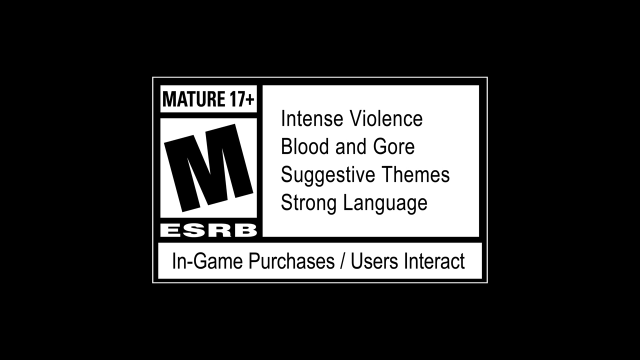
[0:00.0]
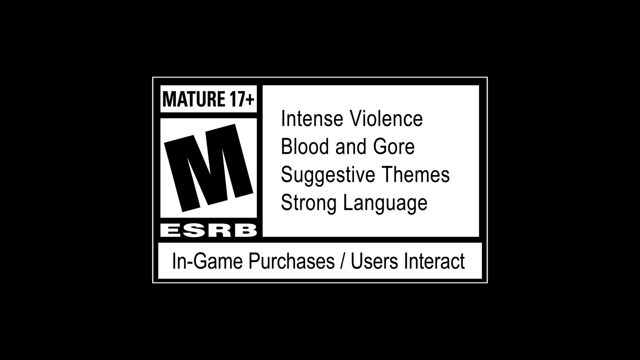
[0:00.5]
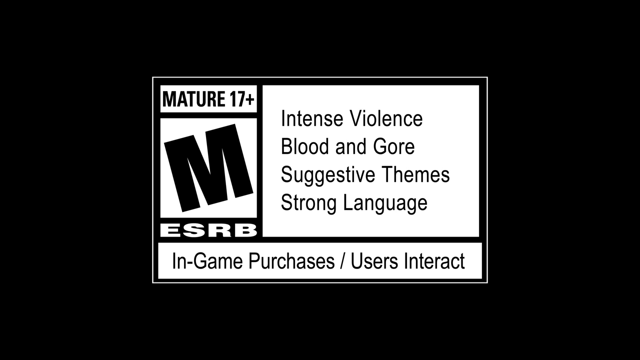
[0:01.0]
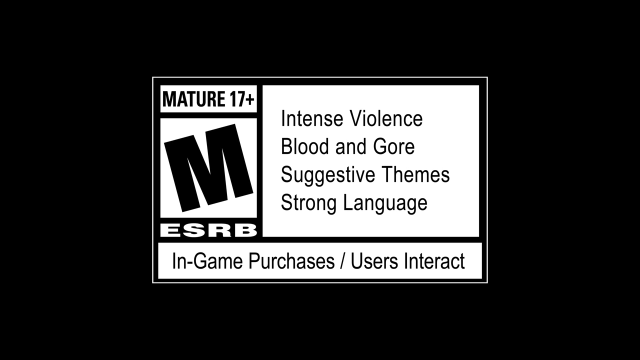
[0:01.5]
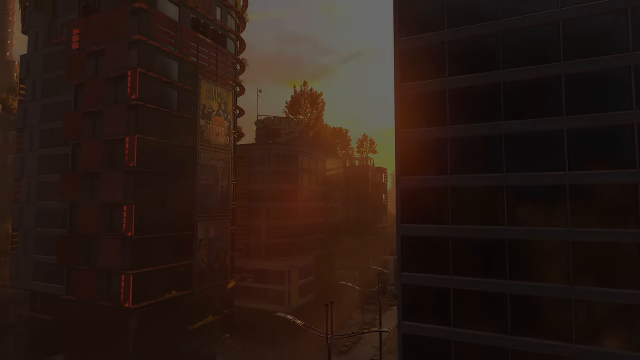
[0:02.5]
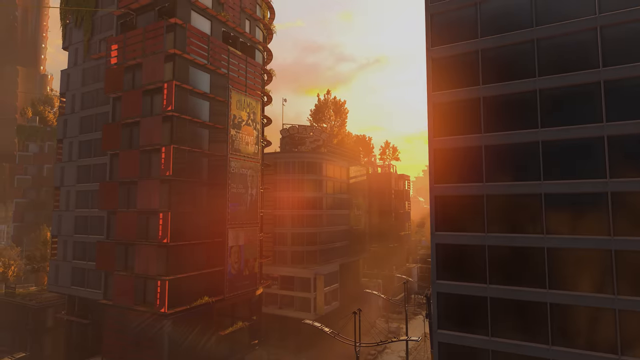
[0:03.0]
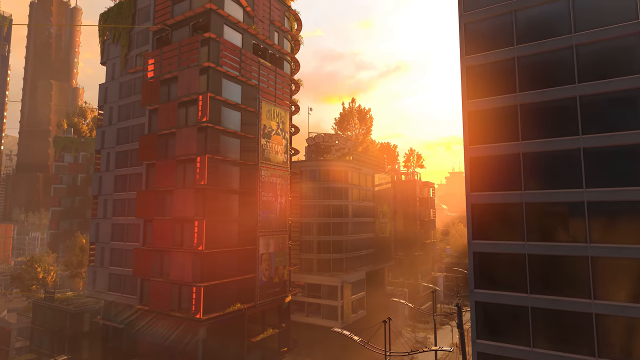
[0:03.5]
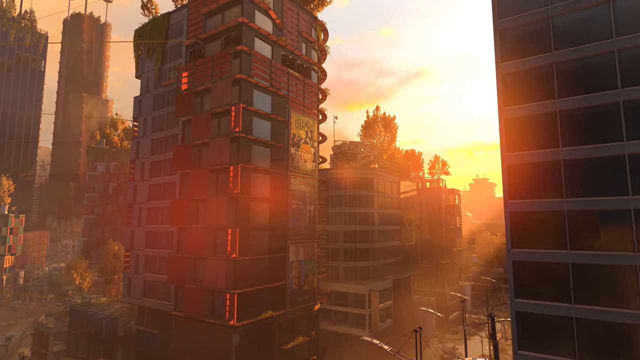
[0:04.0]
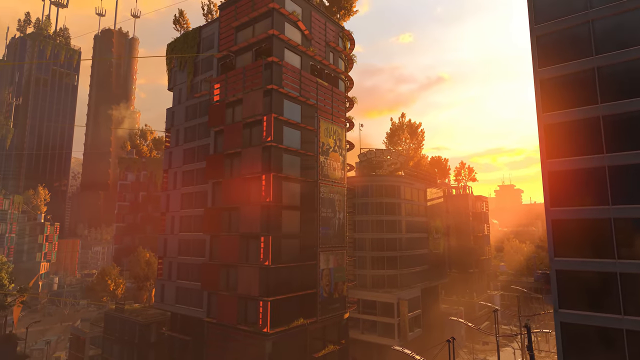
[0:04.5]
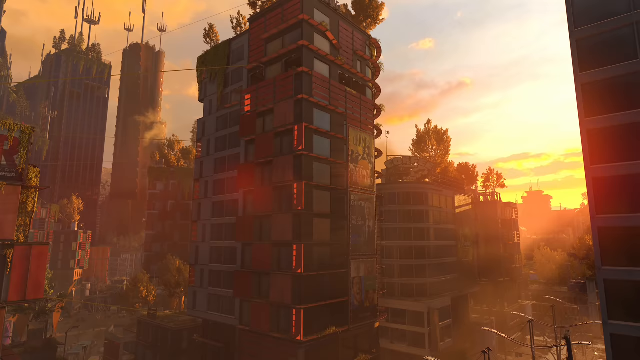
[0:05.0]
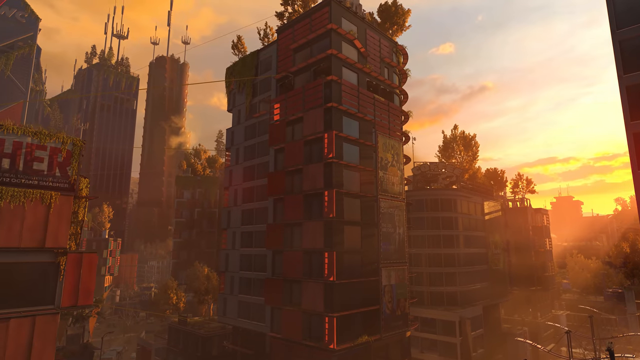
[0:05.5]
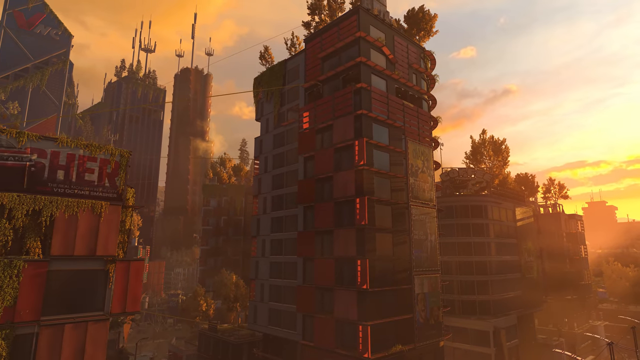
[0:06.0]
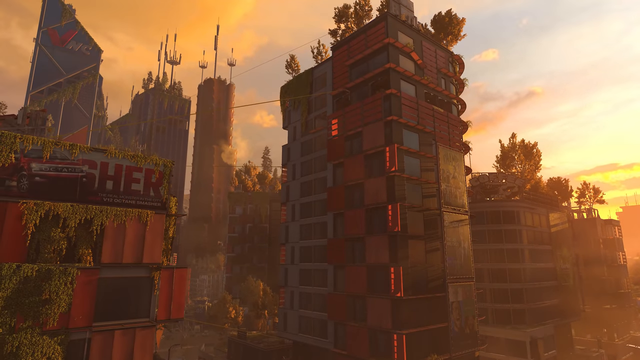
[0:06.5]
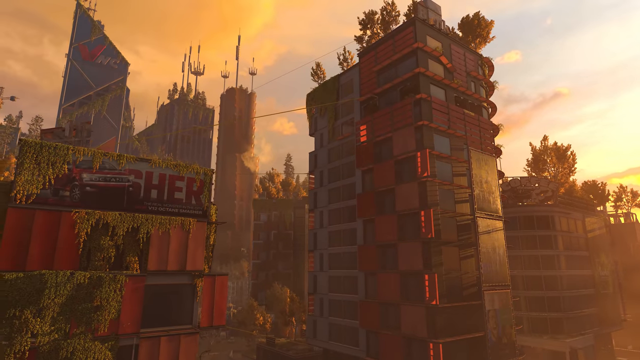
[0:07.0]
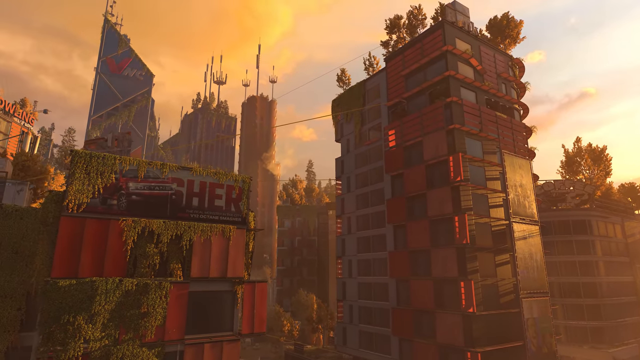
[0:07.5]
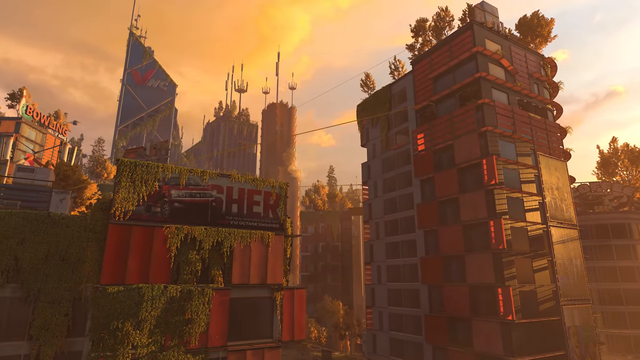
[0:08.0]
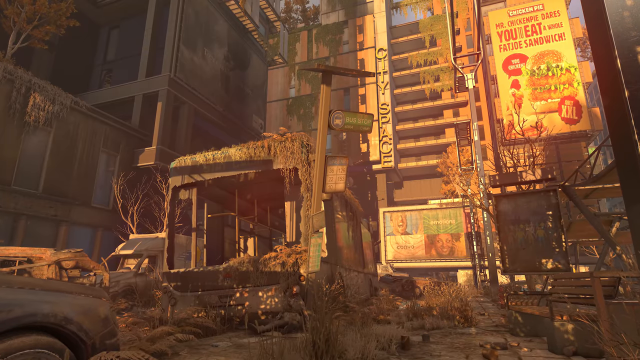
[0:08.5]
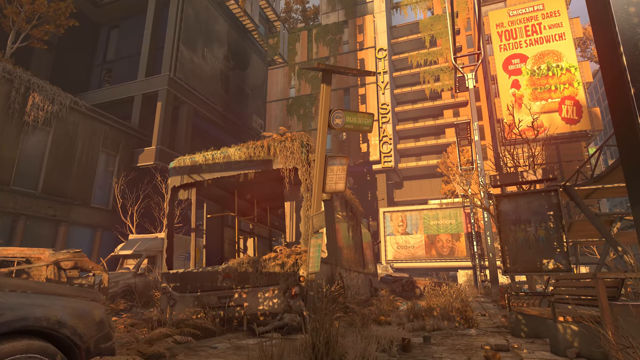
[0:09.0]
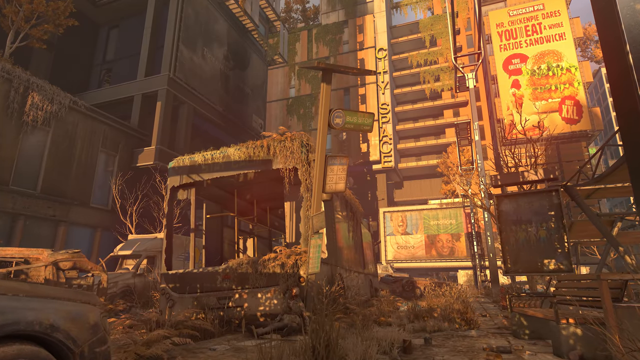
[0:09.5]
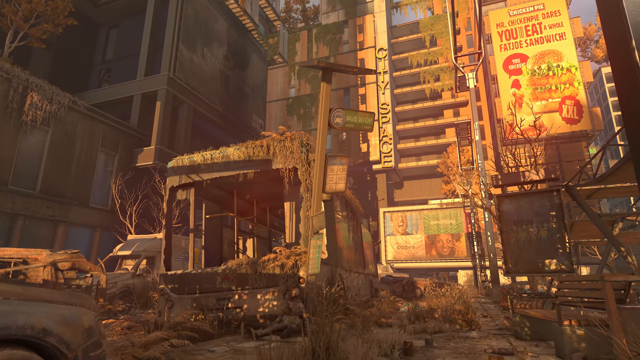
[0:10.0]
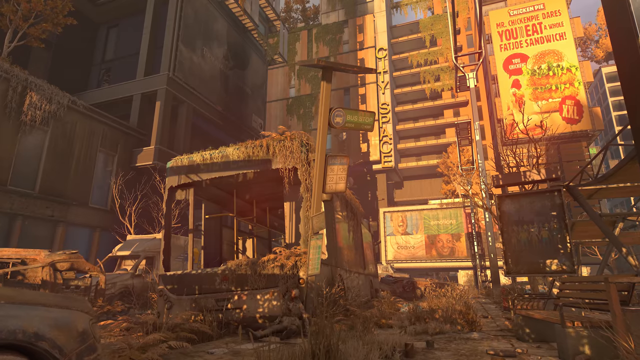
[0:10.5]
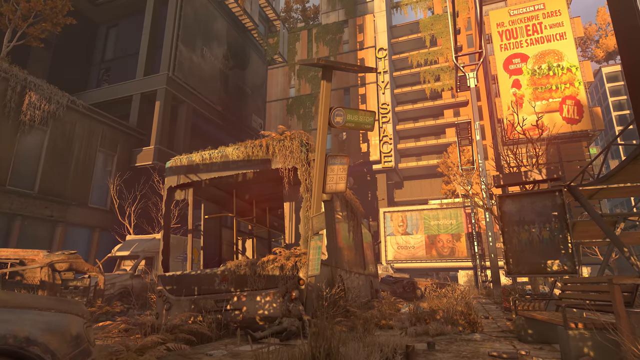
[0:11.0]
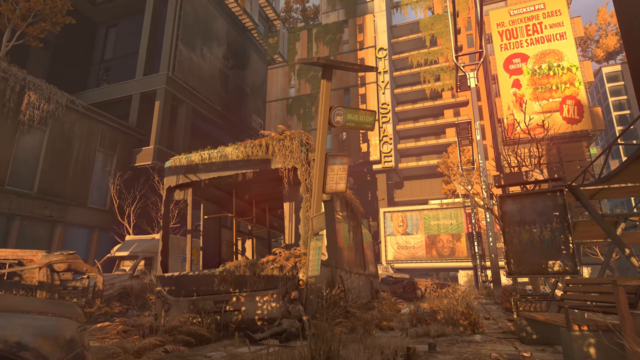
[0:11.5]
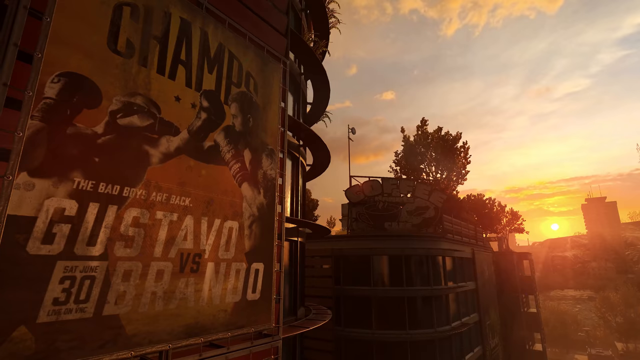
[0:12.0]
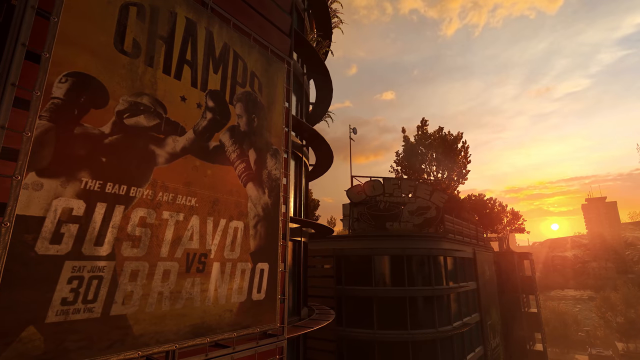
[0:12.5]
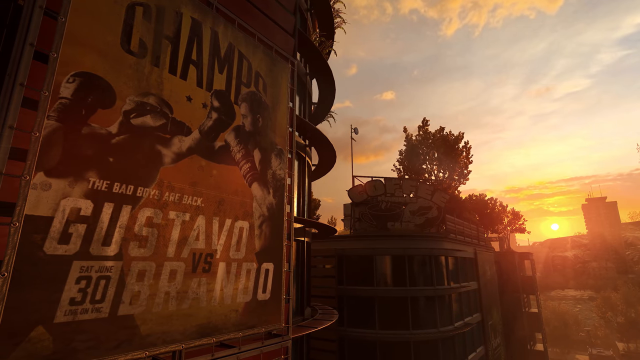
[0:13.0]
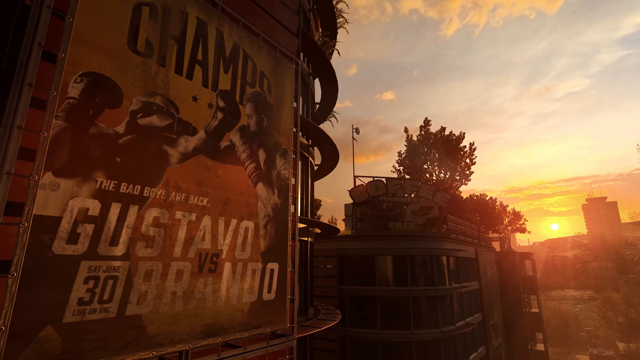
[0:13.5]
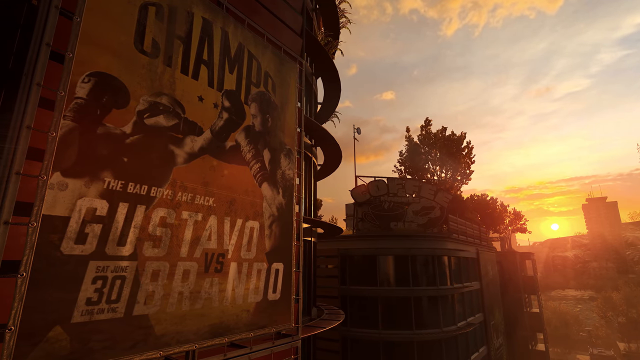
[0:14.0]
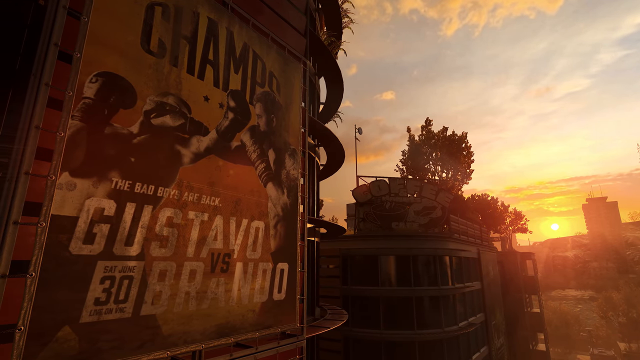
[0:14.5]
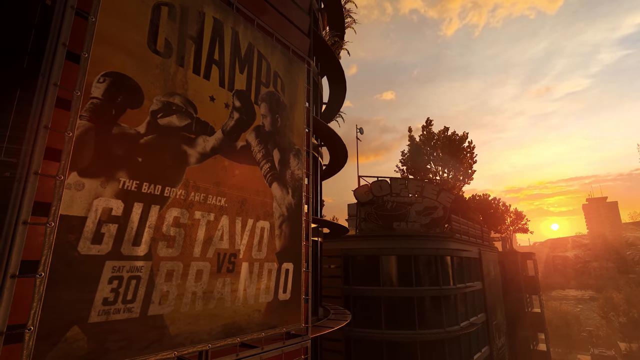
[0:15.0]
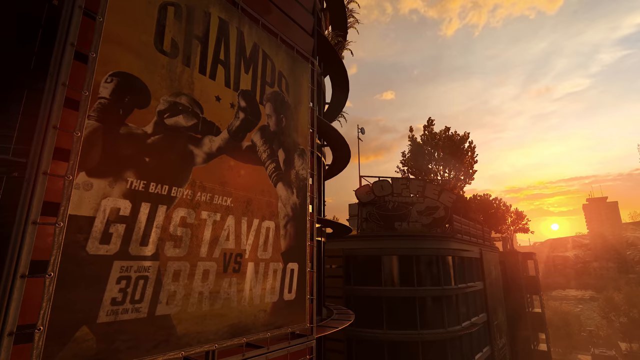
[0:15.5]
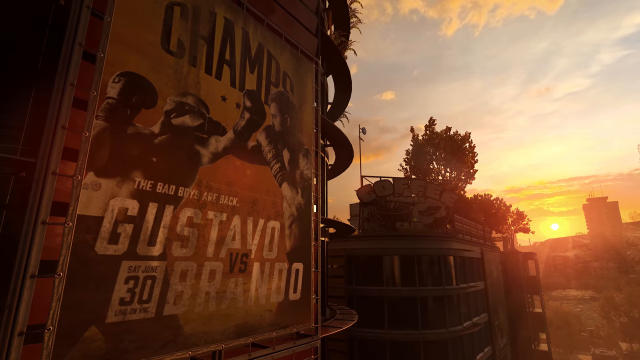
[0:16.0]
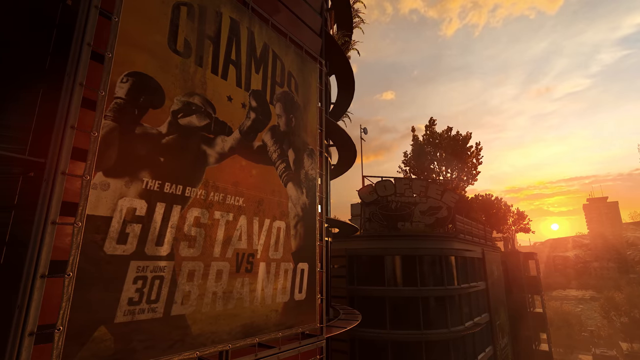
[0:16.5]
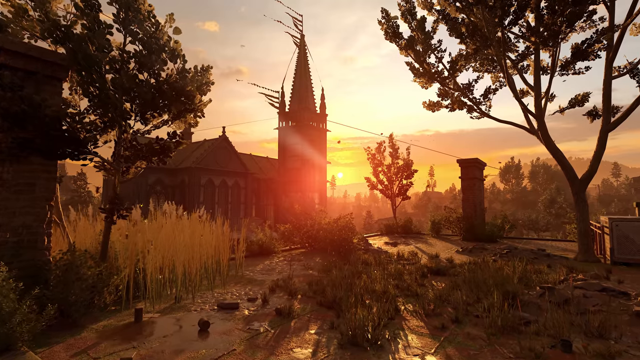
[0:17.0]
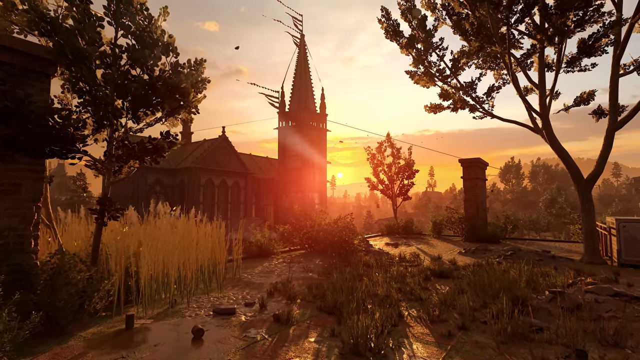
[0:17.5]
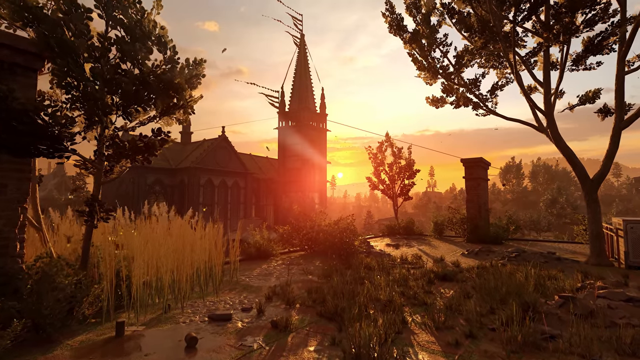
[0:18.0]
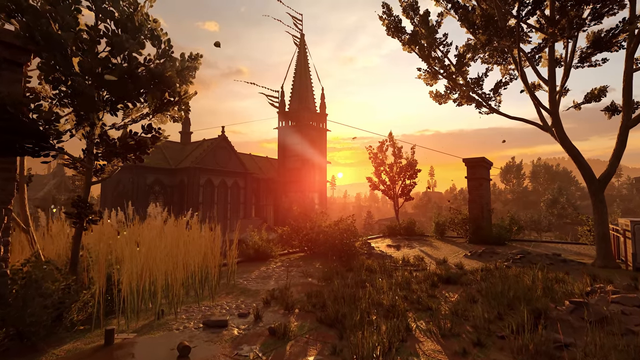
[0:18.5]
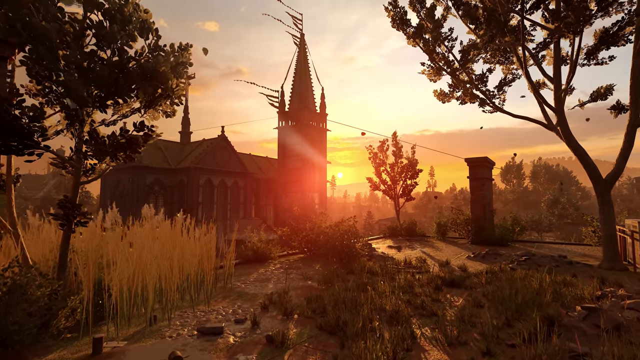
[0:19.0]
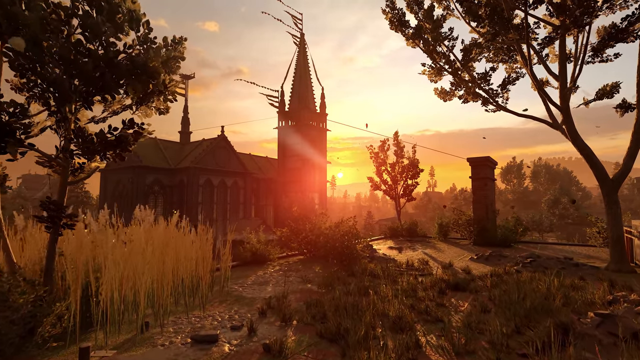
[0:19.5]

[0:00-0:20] The video opens with a game rating warning, apparently indicating mature audiences only. The text reads "mature 17 plus" and "ESRB," along with "in-game purchases / users interact" and "intense violence, blood and gore, suggestive themes, strong language." The video then becomes animated, showing buildings. There is an ad for UFC or boxing. A building that looks like it could be a church appears, apparently at sunrise, with the sun coming up over the destruction. No actual gameplay is seen, only the buildings after everything has been destroyed; the scene appears to show the morning after everything was destroyed the night before.